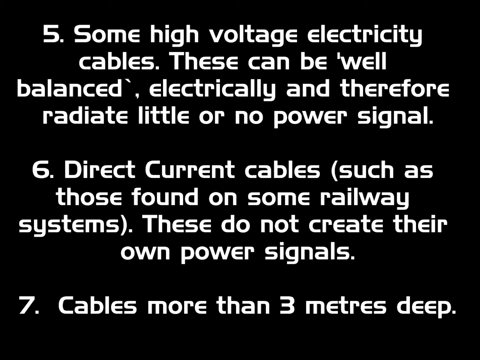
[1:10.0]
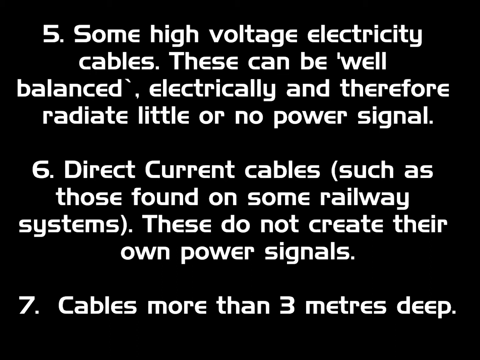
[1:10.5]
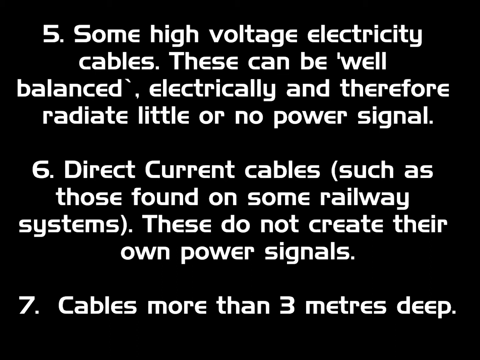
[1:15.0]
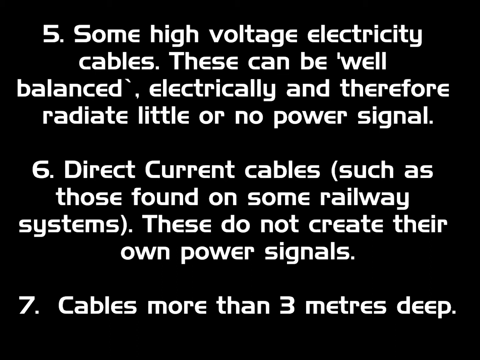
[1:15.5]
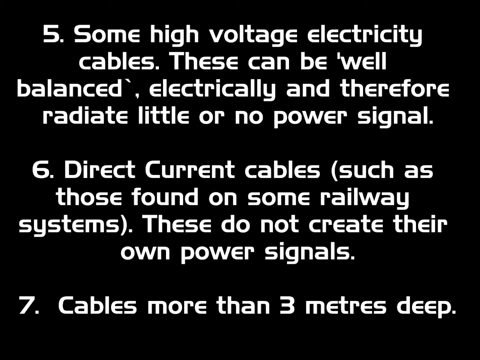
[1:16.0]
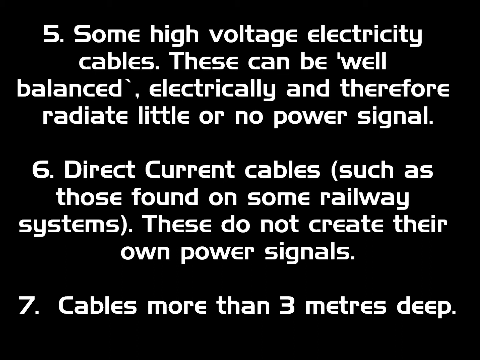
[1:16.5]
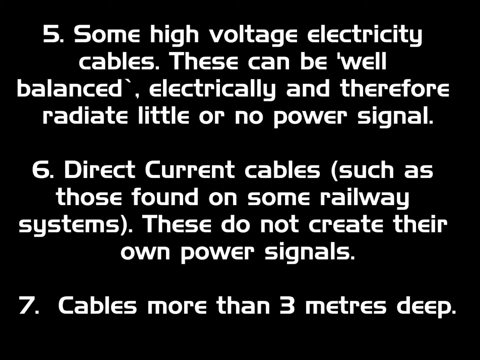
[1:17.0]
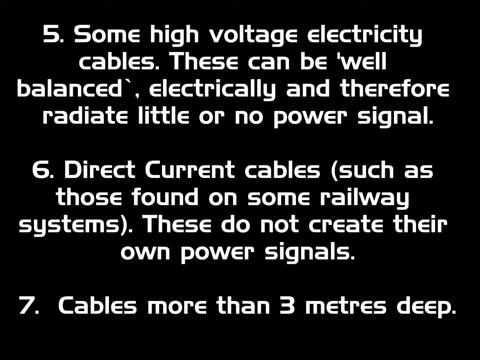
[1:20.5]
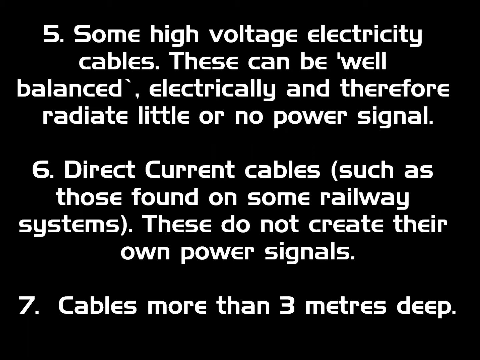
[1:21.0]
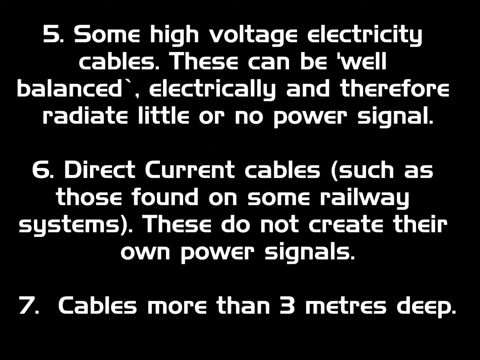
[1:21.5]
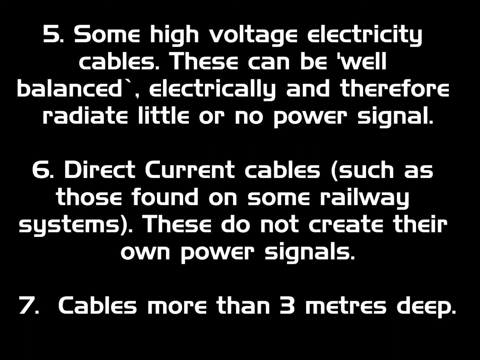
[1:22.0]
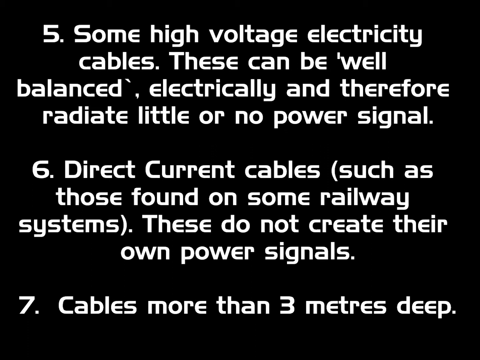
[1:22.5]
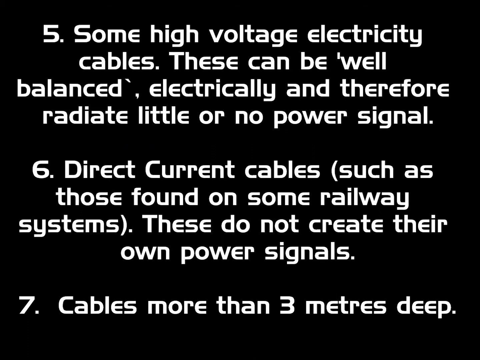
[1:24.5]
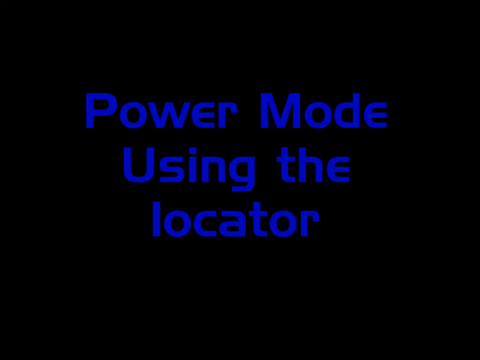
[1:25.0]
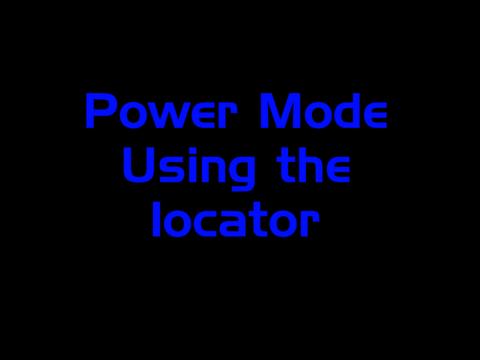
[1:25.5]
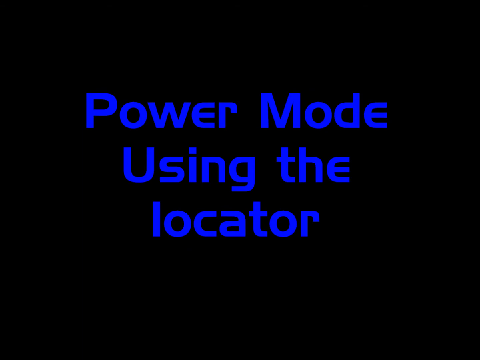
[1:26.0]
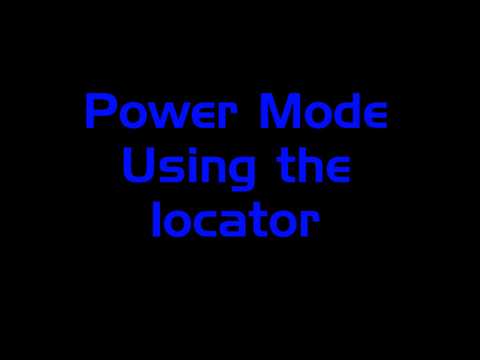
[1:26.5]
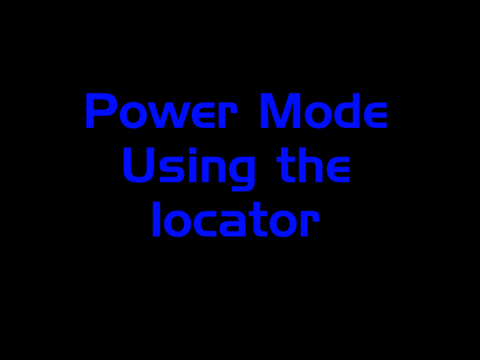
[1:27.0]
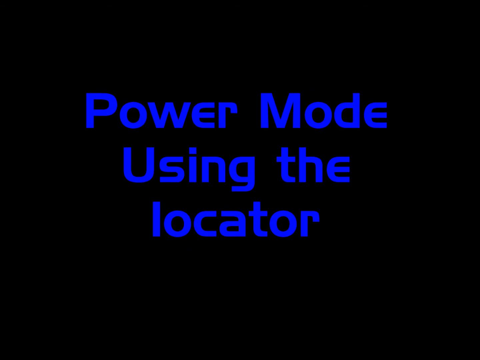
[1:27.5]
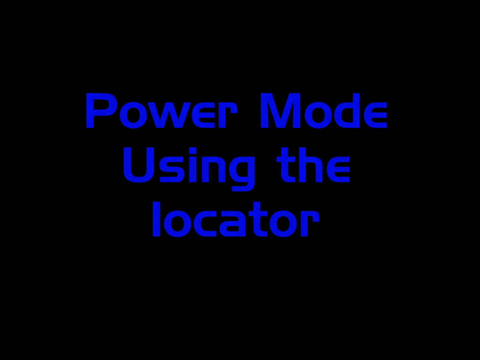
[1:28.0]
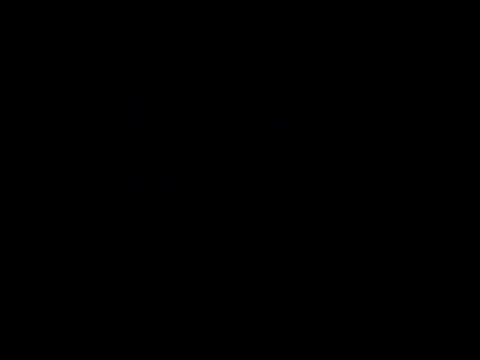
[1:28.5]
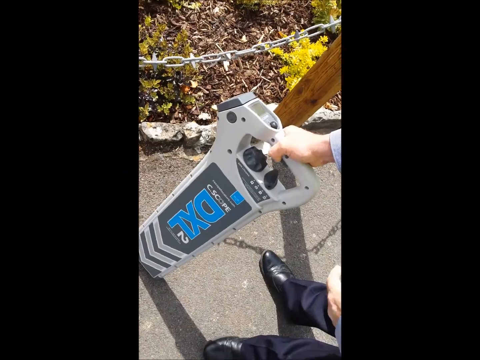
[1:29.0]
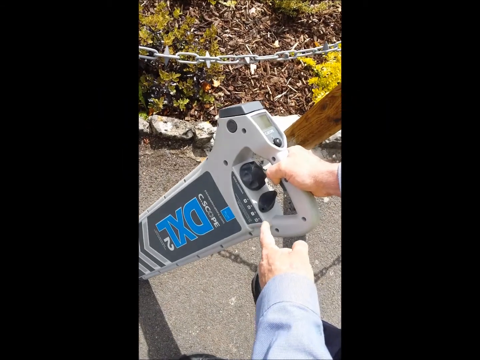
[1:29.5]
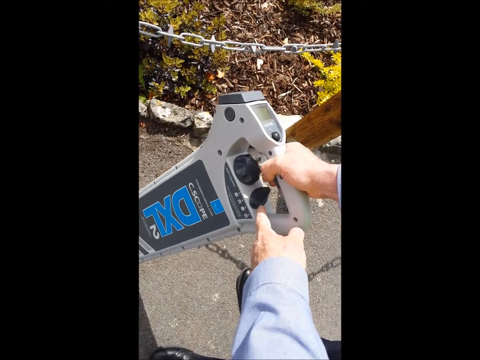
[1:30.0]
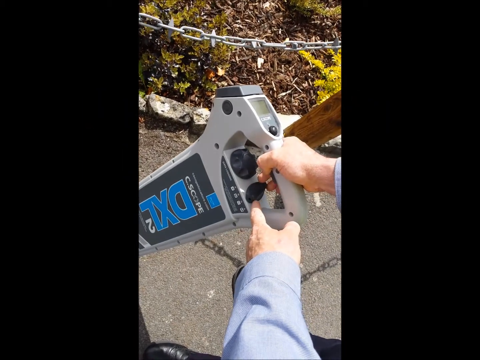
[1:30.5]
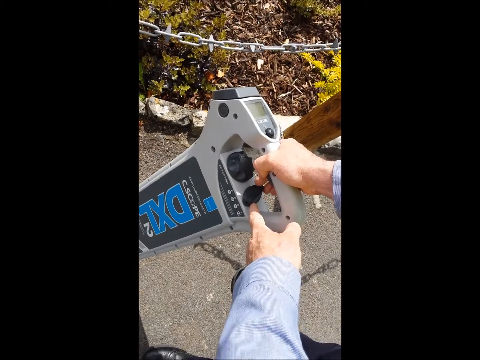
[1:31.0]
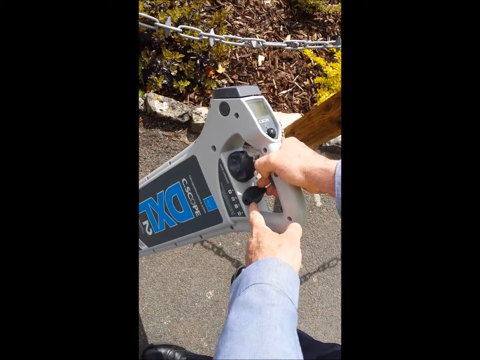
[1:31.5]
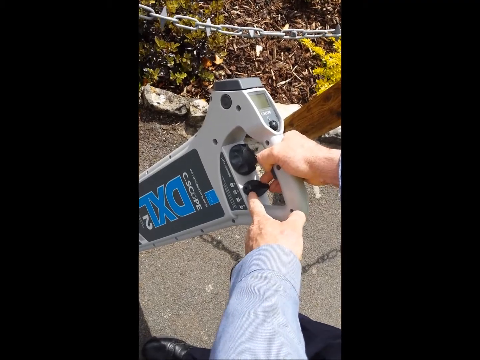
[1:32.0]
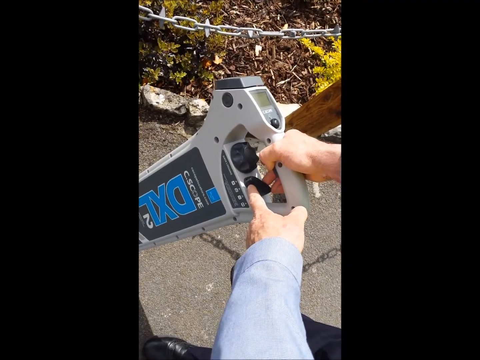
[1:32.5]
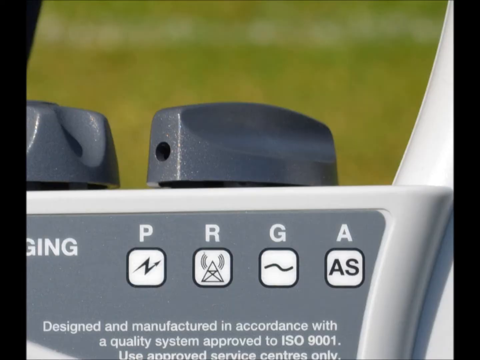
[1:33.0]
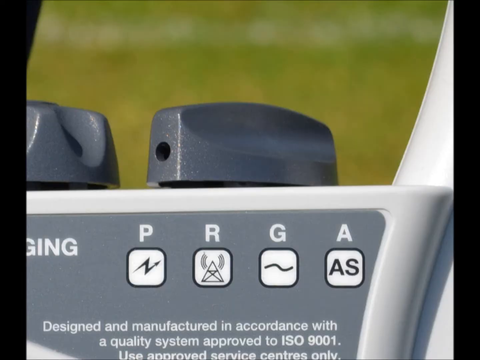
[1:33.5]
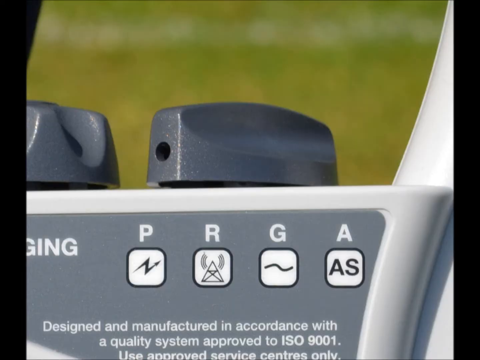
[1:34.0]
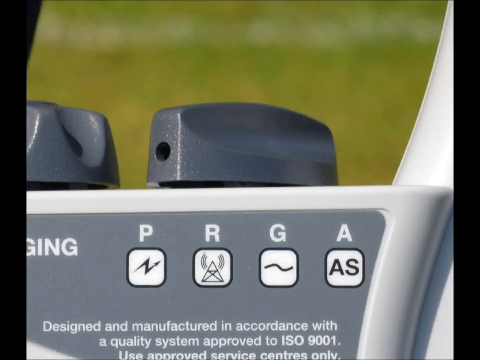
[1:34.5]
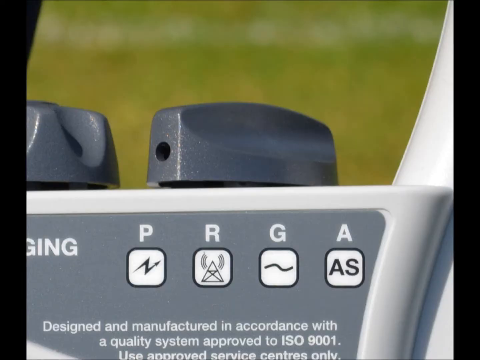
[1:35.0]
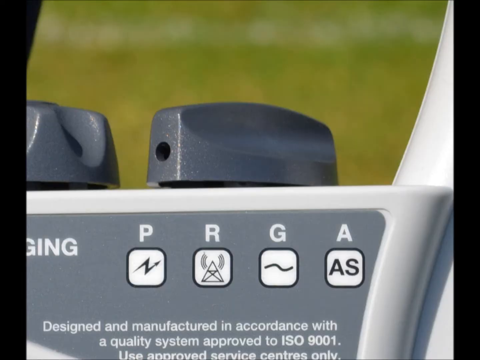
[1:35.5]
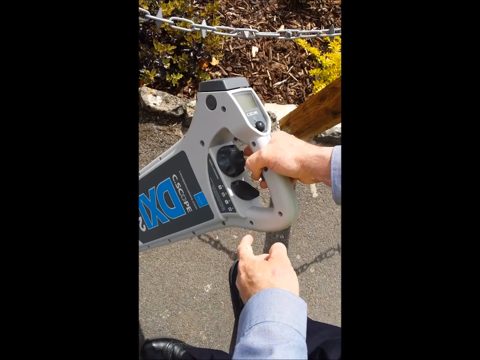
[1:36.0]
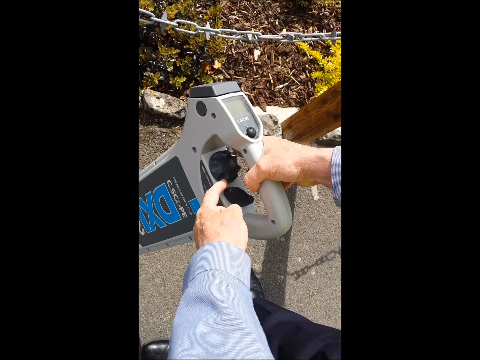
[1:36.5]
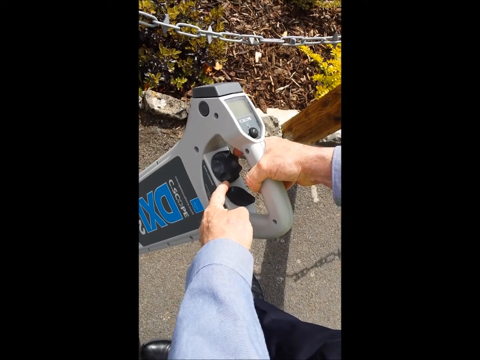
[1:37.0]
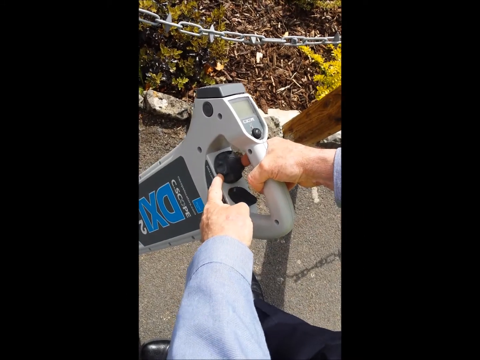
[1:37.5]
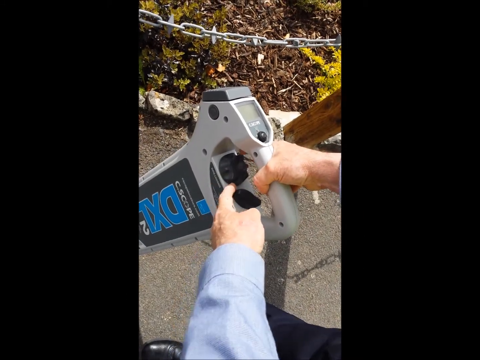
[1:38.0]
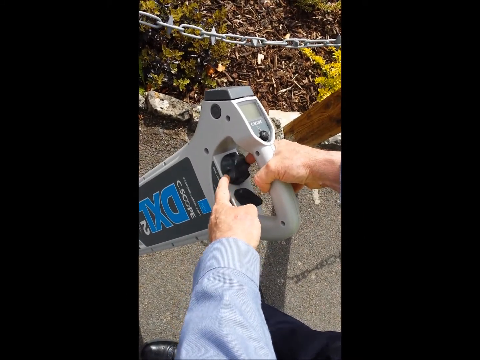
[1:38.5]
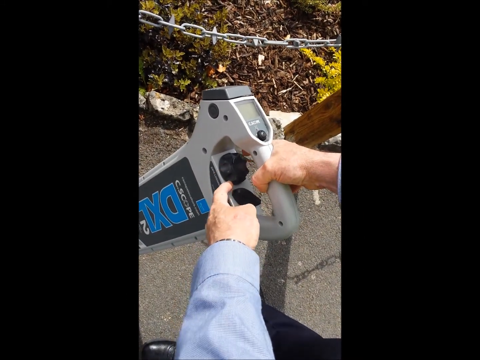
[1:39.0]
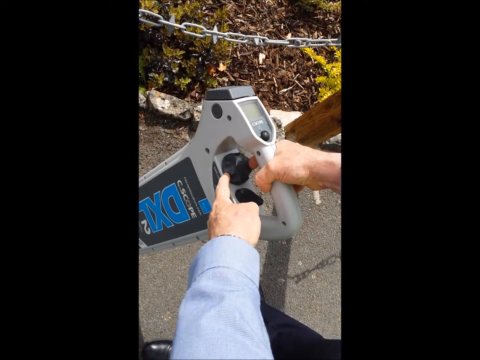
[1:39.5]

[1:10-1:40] The list of where power mode may not work continues with number five, "some high voltage electricity cables," which "can be well balanced electrically and therefore radiate little or no power signal." Number six says "direct current cables such as those found on some railway systems, these do not create their own power signals," and seven says "cables more than three meters deep," ending at the very bottom of the page. The video then moves to a section with blue text reading "power mode using the locator." Footage follows of someone holding a power mode detector with tabs marked P, R, G, and A and dials that spin. The footage is taken outside, with the detector held up to a power area; the person wears a long-sleeved light blue dress shirt.